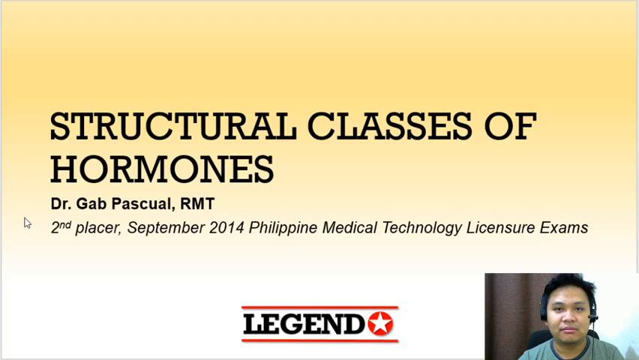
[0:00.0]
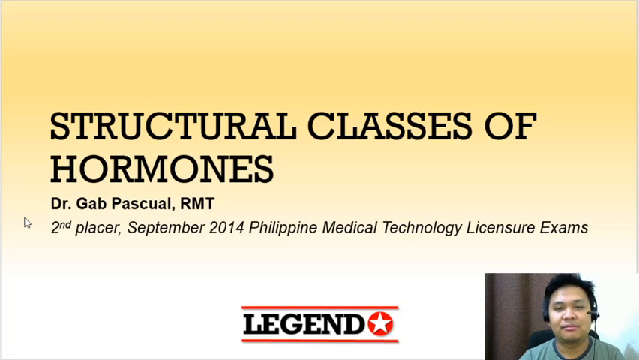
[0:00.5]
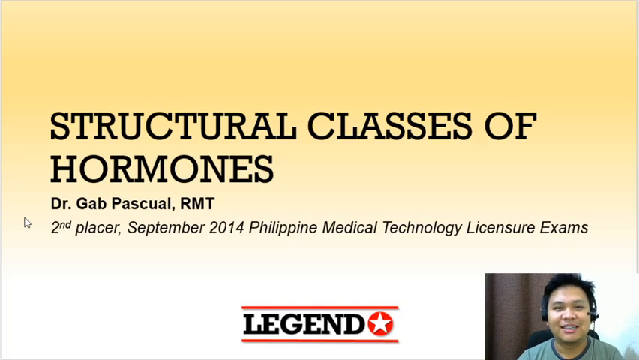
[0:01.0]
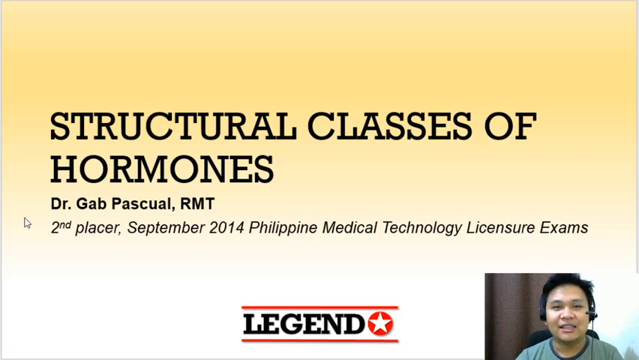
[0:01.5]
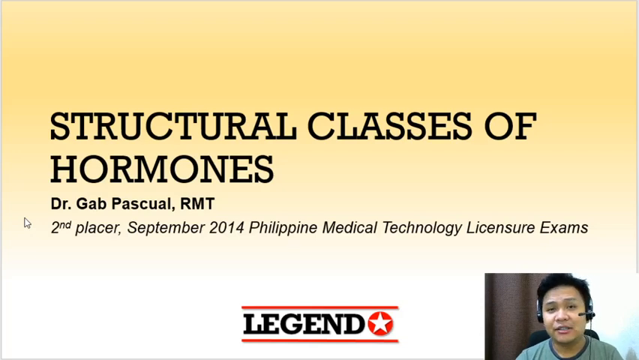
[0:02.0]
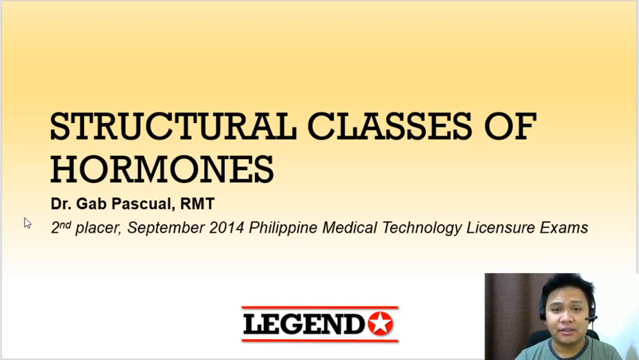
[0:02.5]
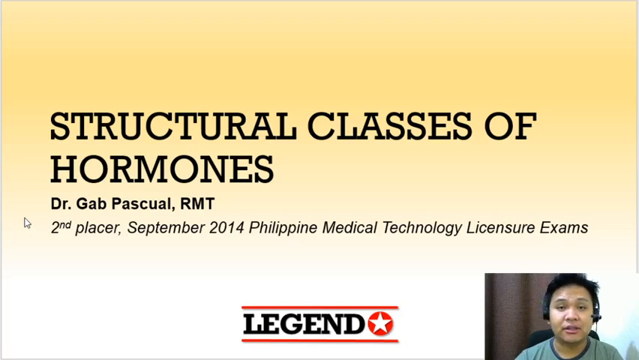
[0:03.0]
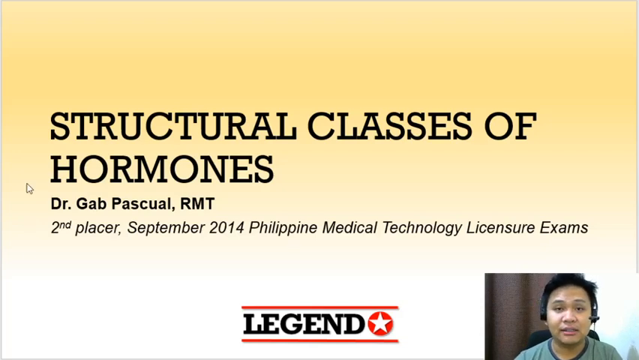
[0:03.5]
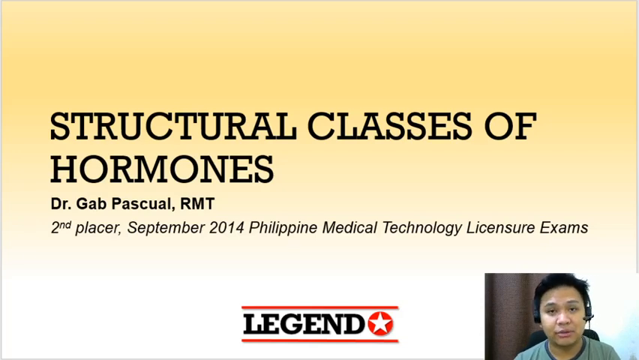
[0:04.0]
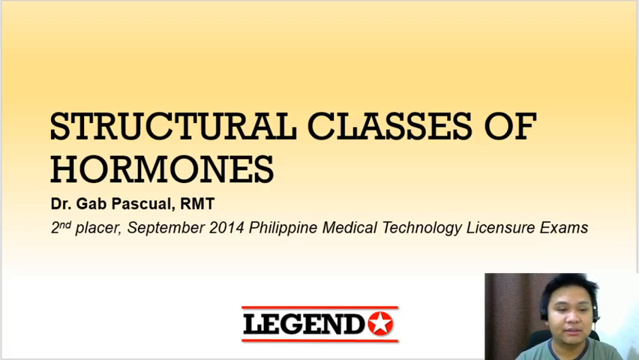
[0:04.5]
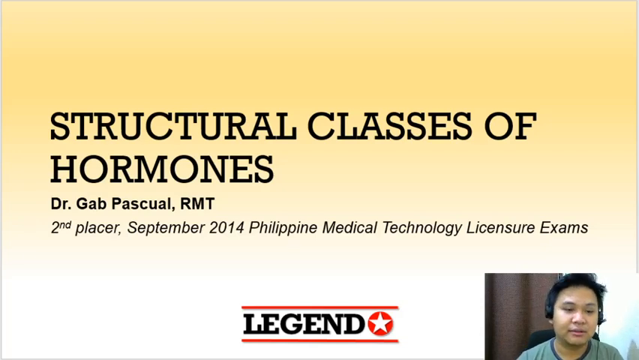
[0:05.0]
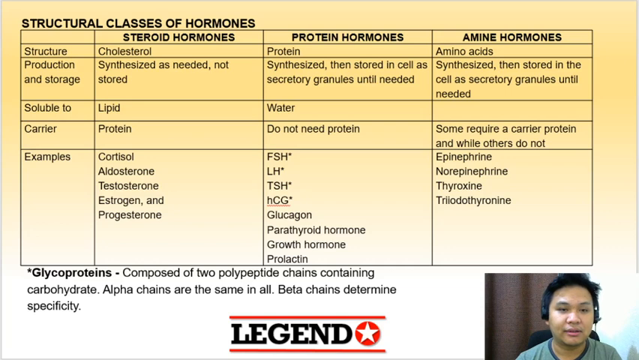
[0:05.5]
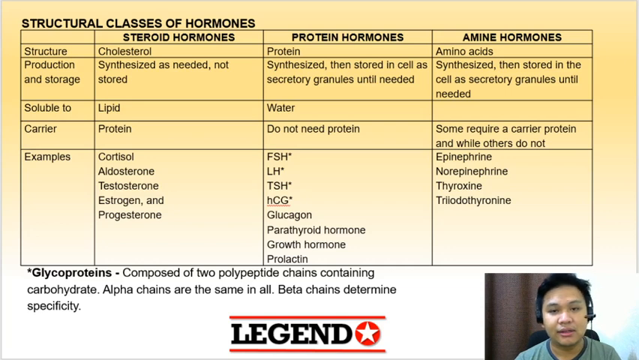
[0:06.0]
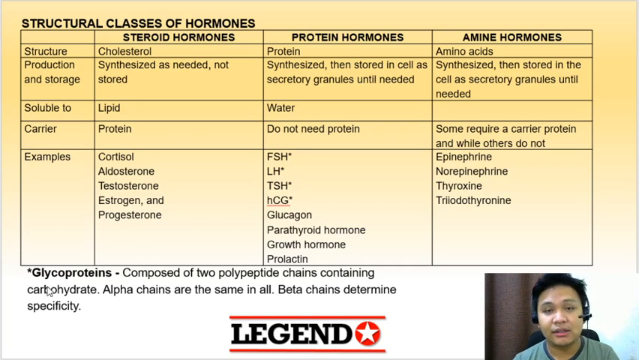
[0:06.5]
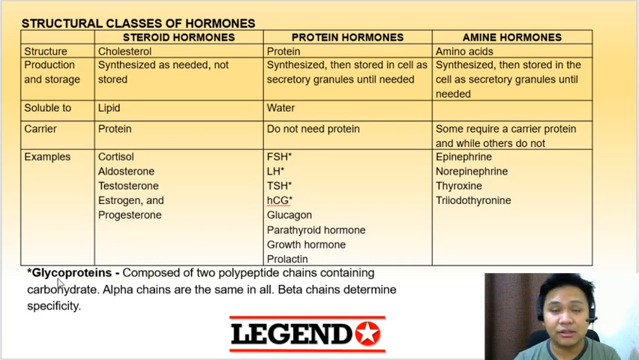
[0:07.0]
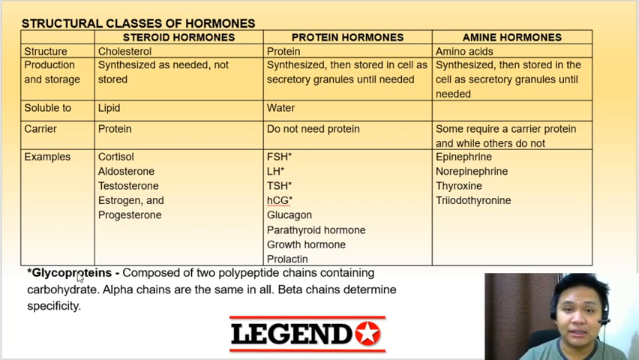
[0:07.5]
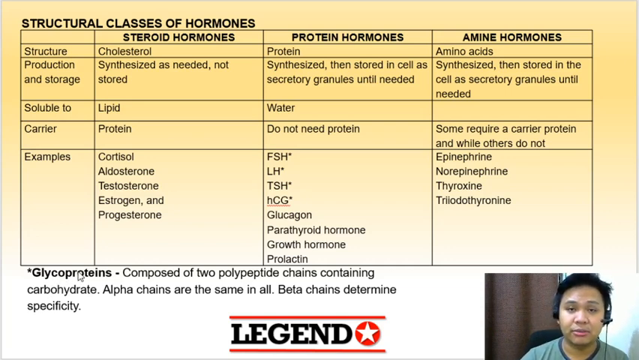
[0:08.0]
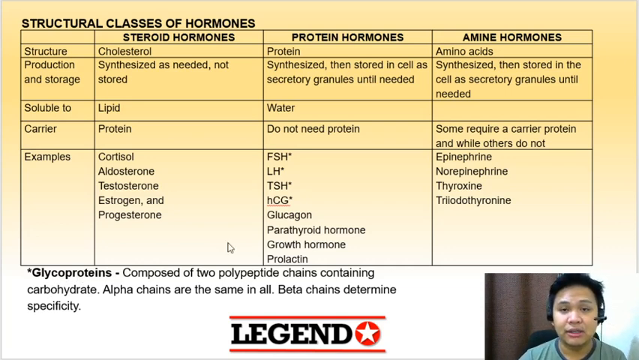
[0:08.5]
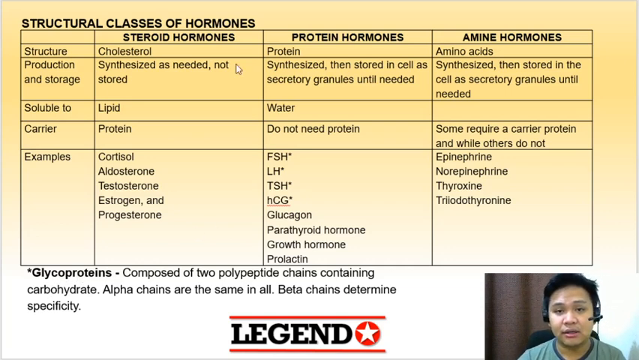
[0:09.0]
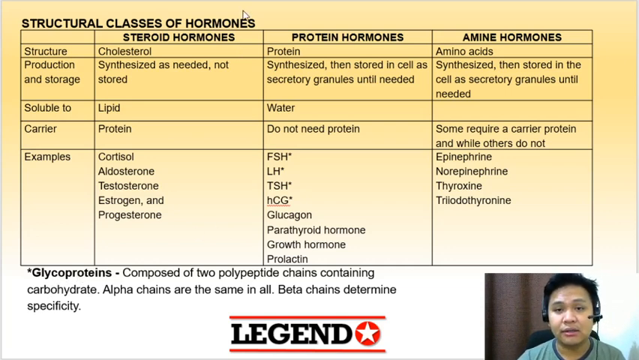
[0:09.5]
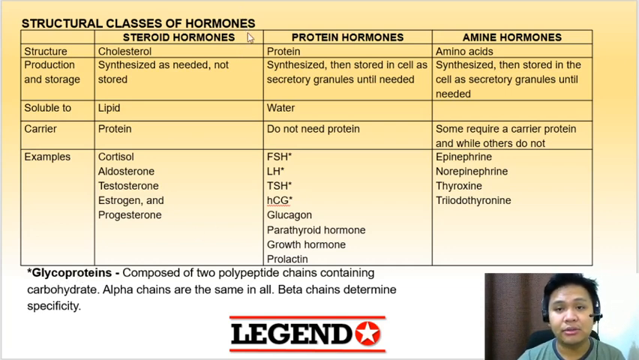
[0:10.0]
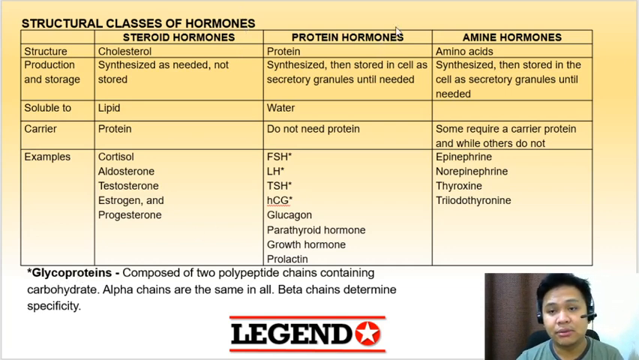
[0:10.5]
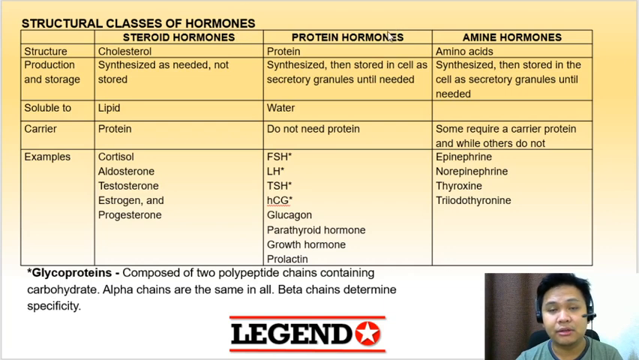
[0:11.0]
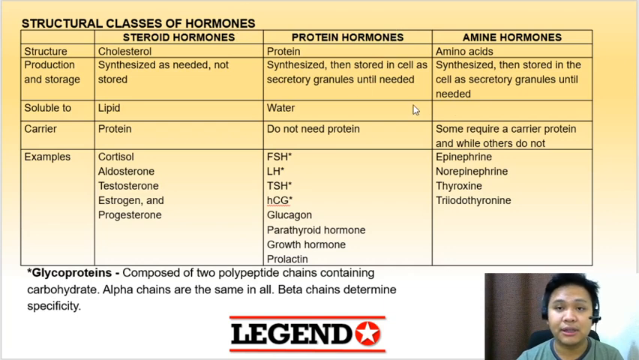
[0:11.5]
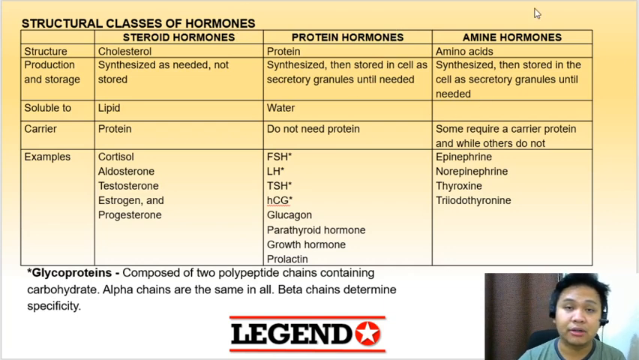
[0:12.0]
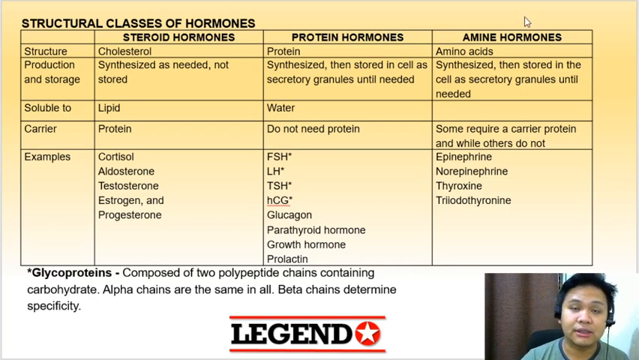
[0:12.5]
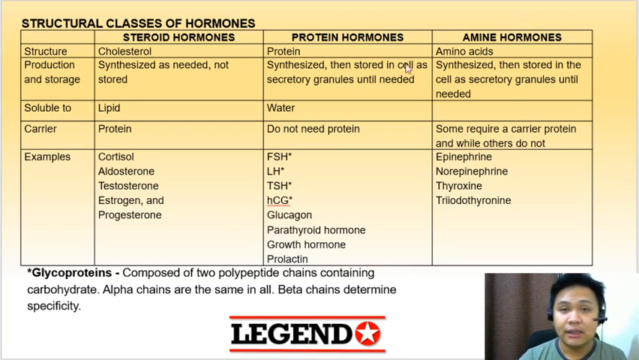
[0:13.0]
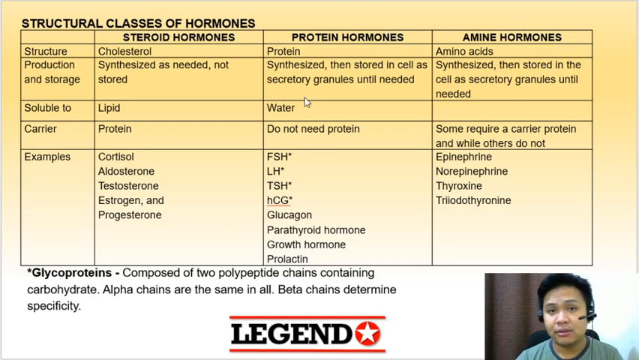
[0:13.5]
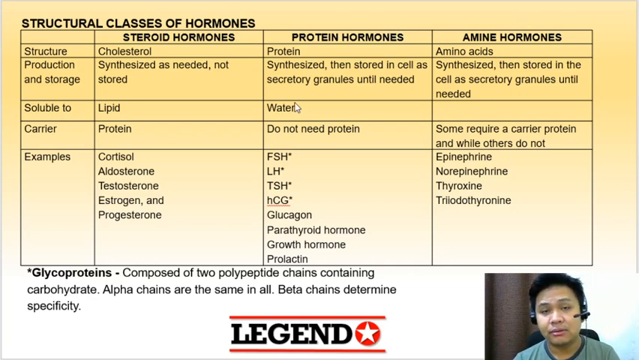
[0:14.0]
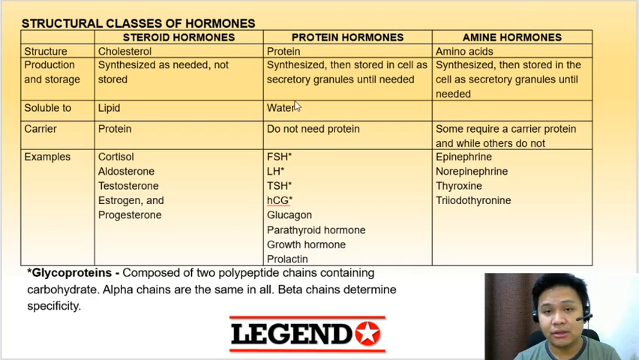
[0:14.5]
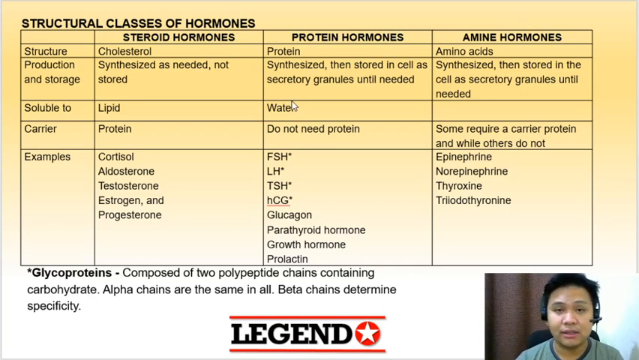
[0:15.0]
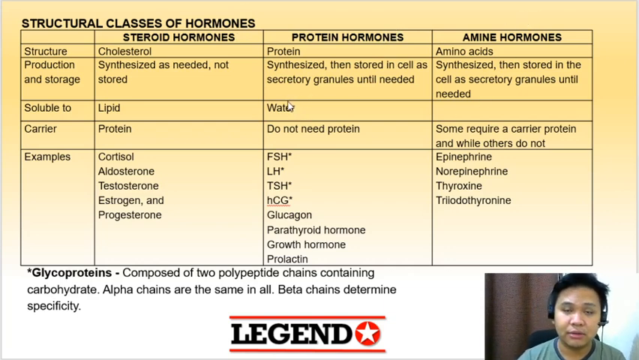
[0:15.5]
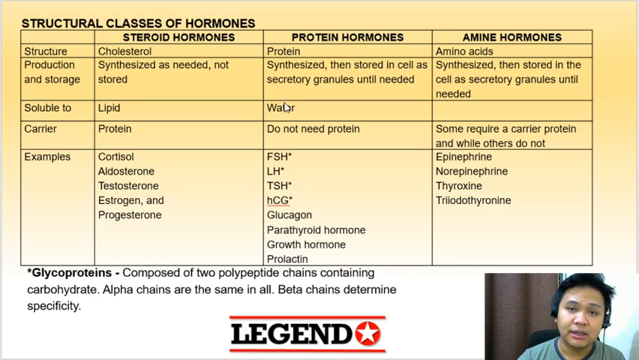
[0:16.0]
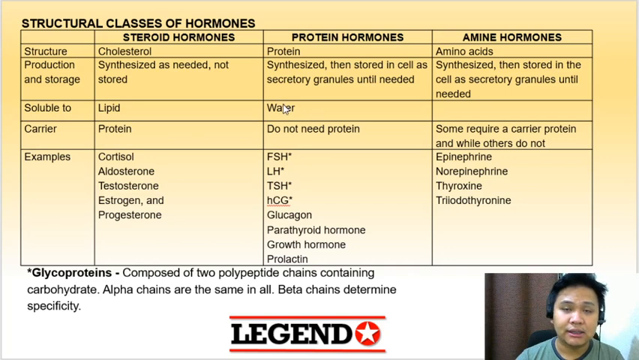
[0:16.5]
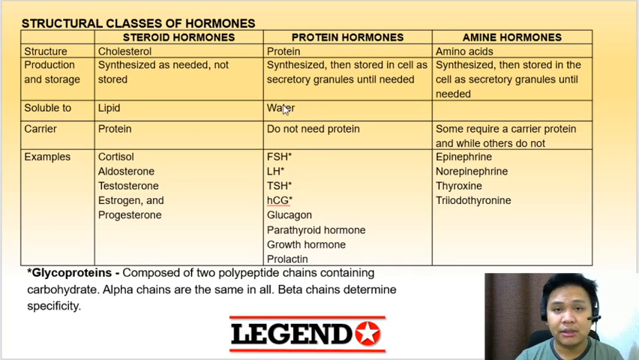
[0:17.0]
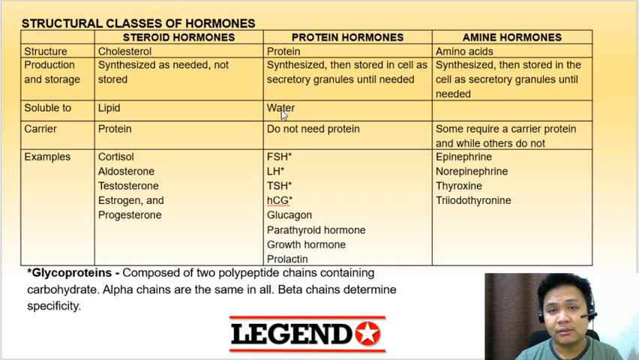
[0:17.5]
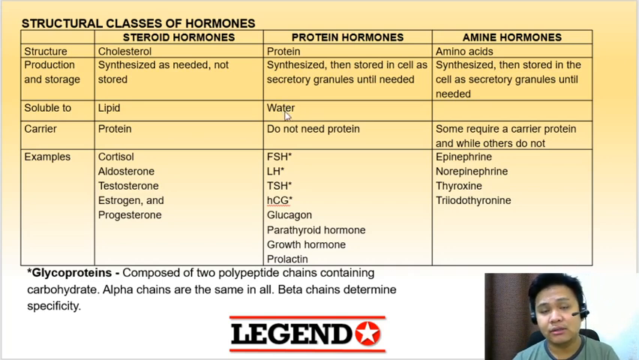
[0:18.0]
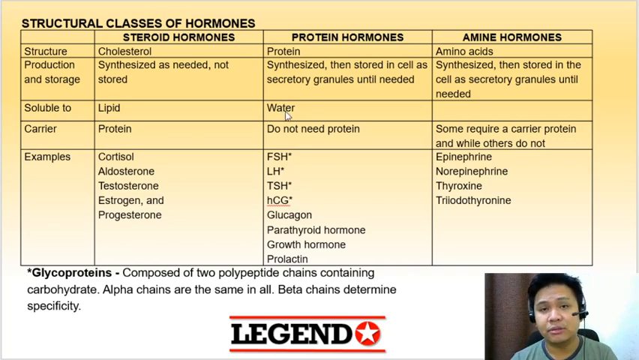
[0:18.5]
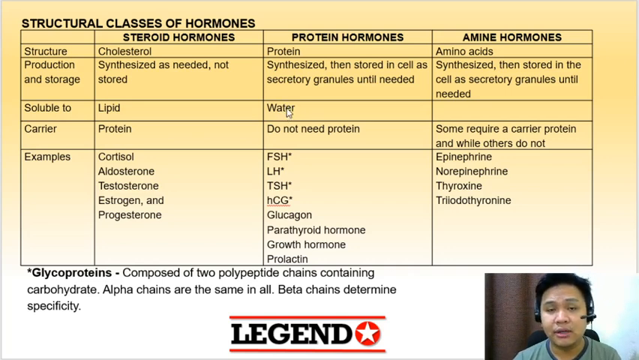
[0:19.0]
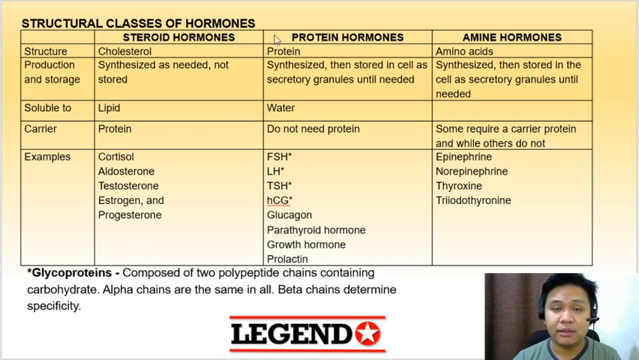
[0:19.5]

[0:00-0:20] The screen shows the heading "structural classes of hormones" in capital letters. The background at the top of the screen is a faded orange colour with some transparency; underneath it is a white area, and underneath that is a purple background. Under the heading is the text "Dr. Gab Pasquale, RMT, second placer, September 2014, Philippine Medical Technology Licensure Exams", with the word "legend" underneath, which appears to be a logo of some kind. In the bottom right corner of the screen, a person wearing headphones appears to be talking. The next screen shows a table on the structural classes of hormones, with three headings: steroid hormones, protein hormones and amine hormones. The table gives information about production and storage, what the hormones are soluble to, the carrier, and examples.